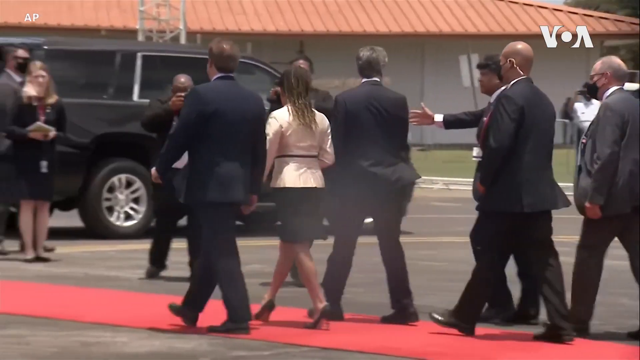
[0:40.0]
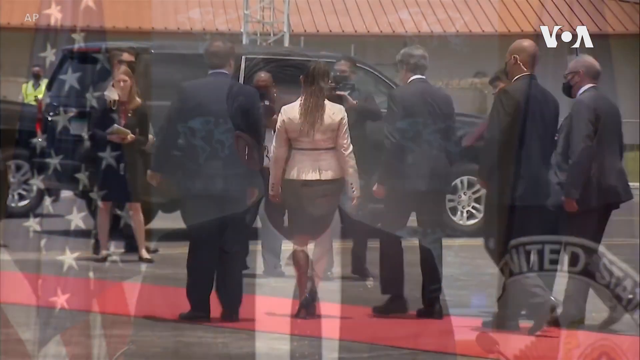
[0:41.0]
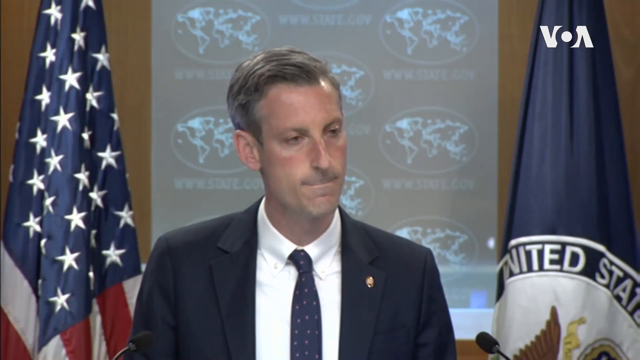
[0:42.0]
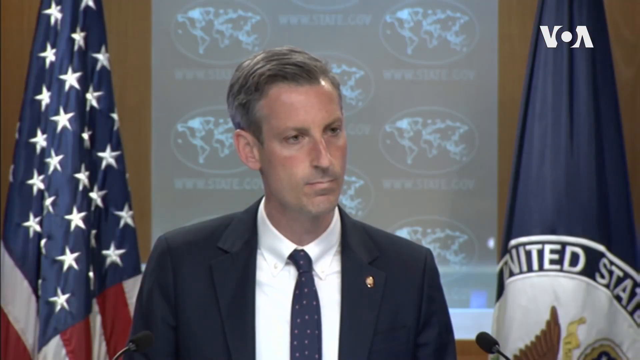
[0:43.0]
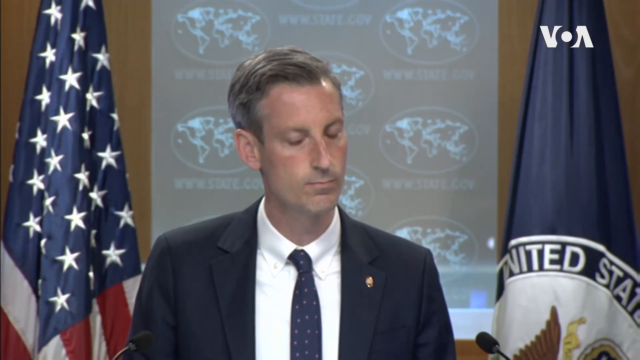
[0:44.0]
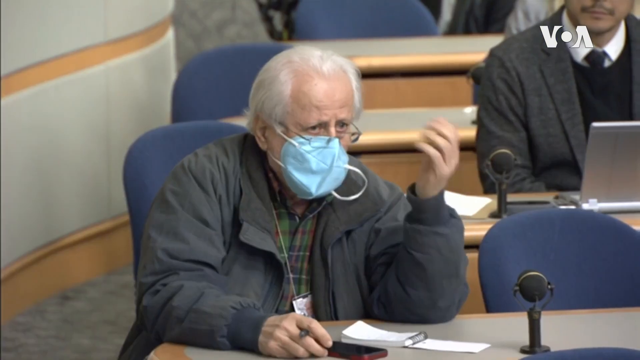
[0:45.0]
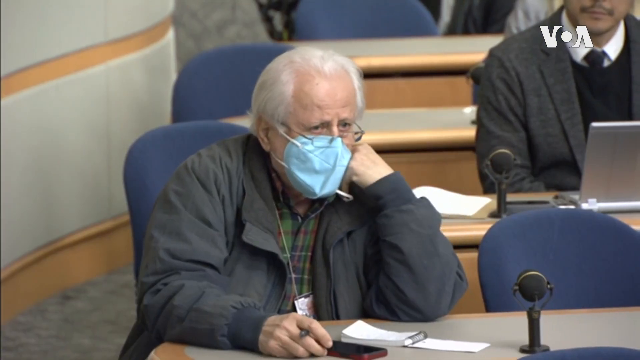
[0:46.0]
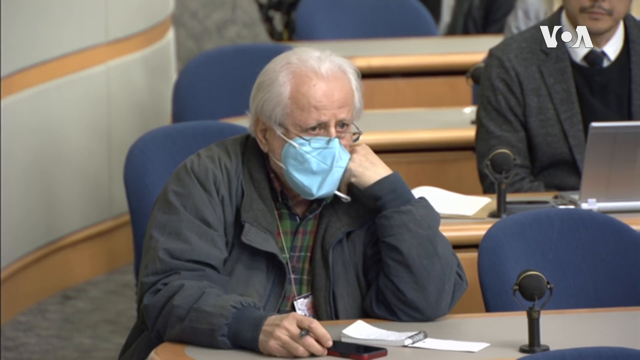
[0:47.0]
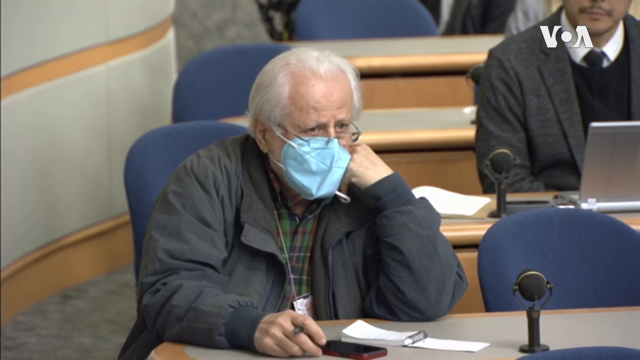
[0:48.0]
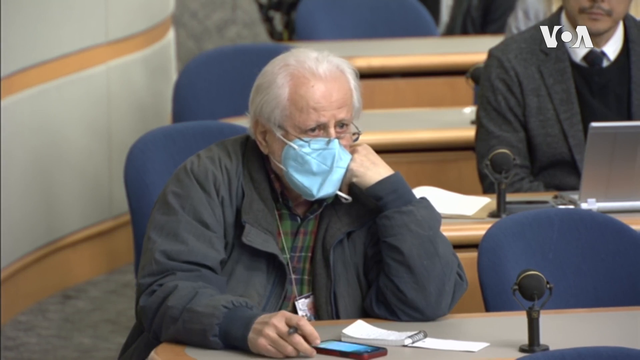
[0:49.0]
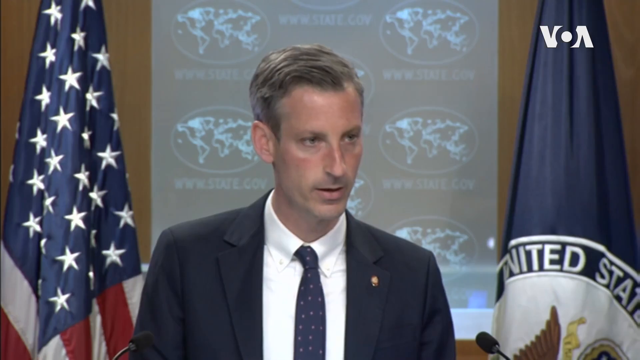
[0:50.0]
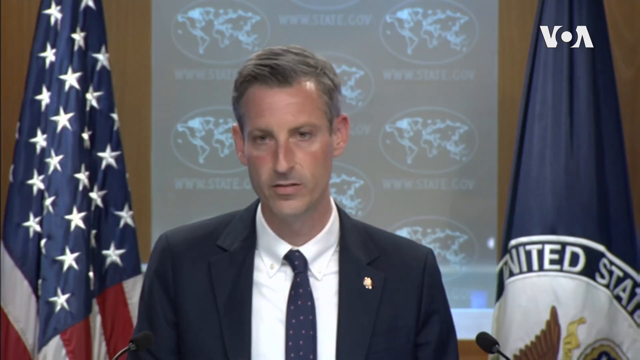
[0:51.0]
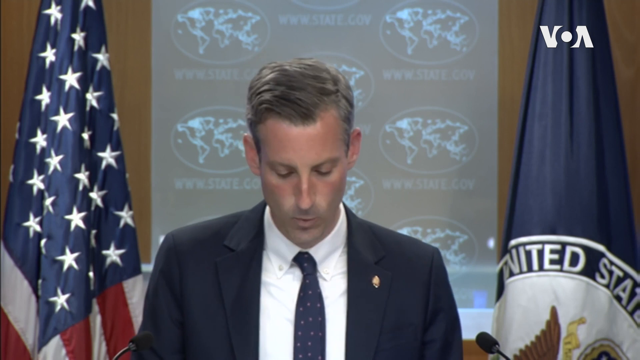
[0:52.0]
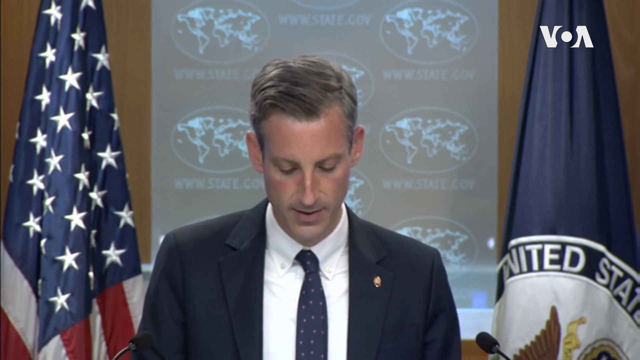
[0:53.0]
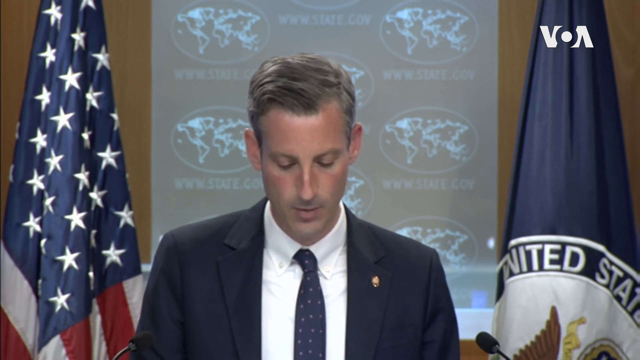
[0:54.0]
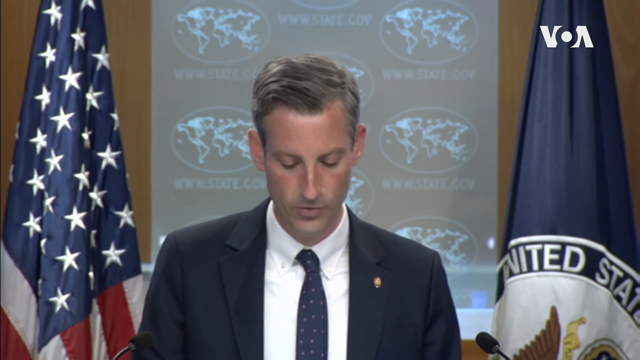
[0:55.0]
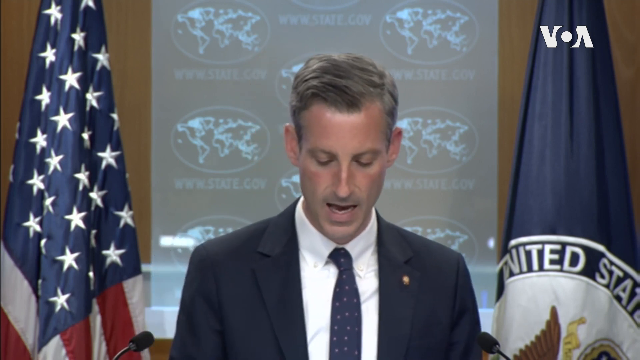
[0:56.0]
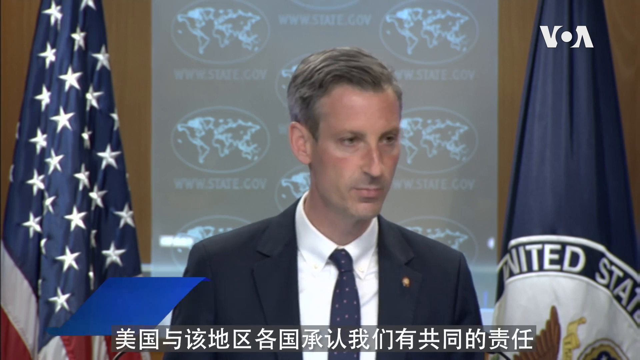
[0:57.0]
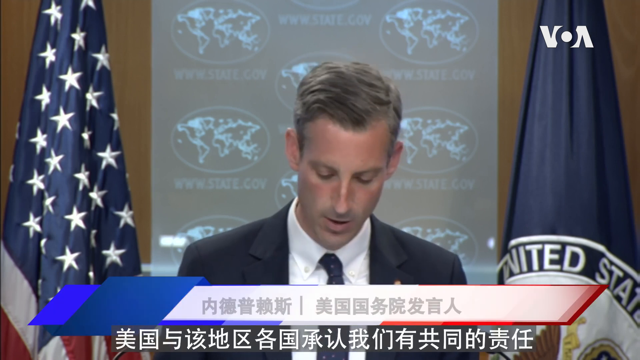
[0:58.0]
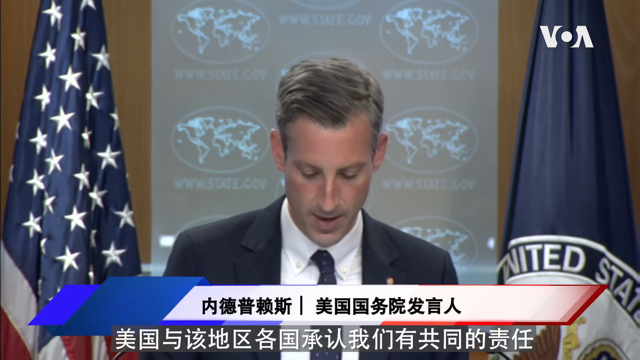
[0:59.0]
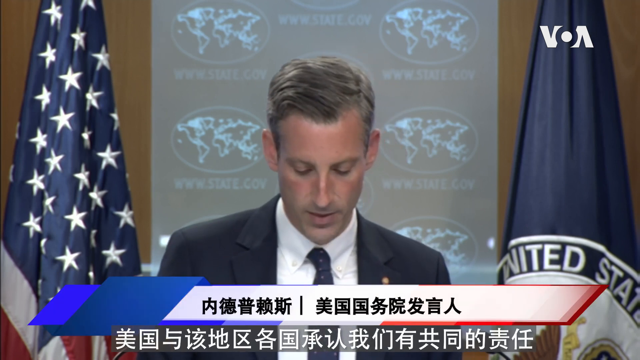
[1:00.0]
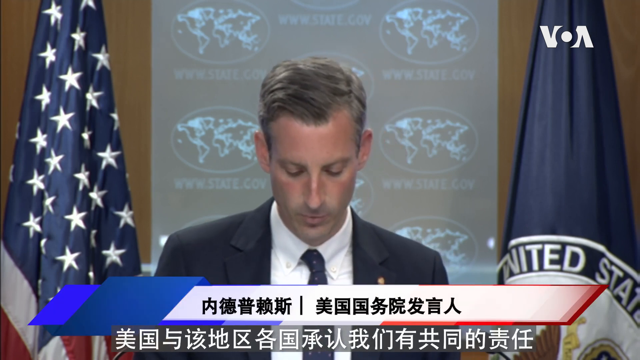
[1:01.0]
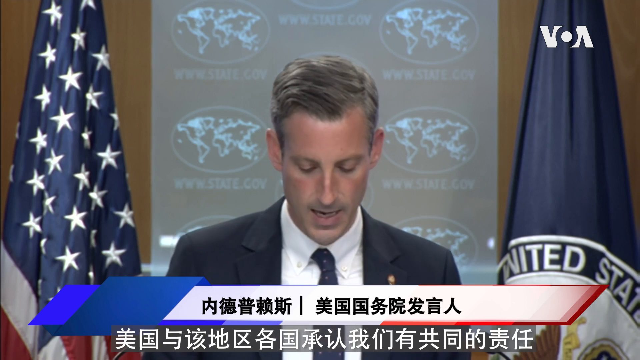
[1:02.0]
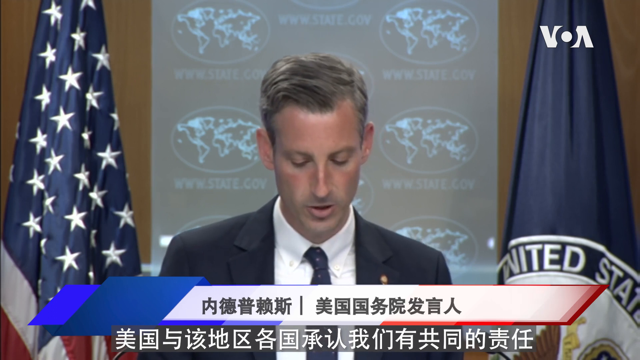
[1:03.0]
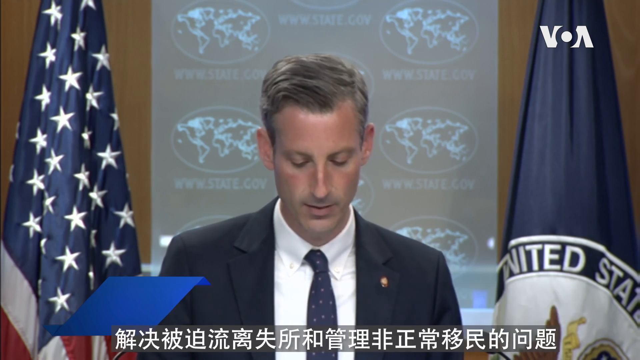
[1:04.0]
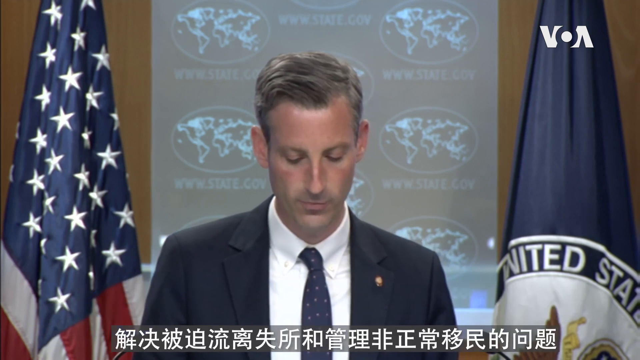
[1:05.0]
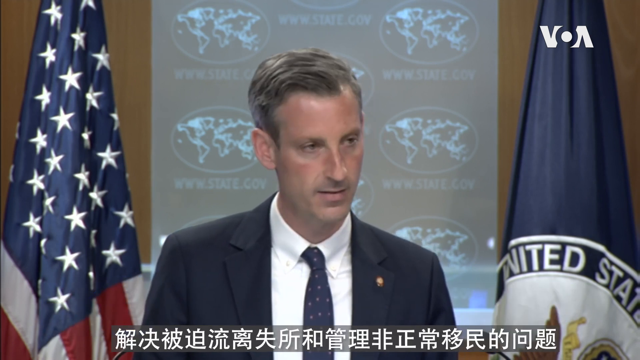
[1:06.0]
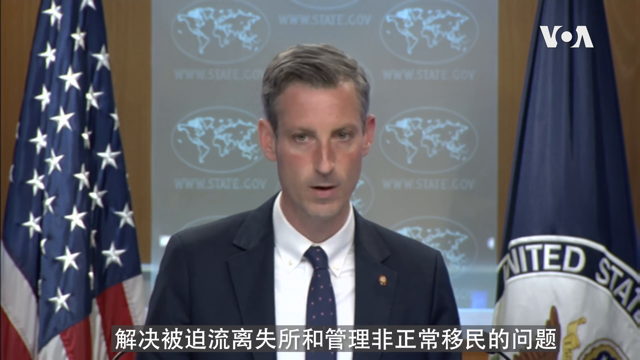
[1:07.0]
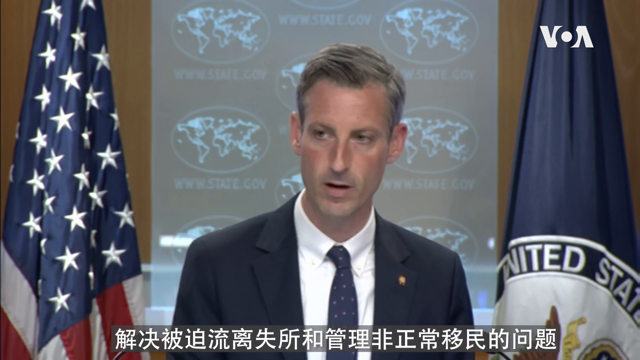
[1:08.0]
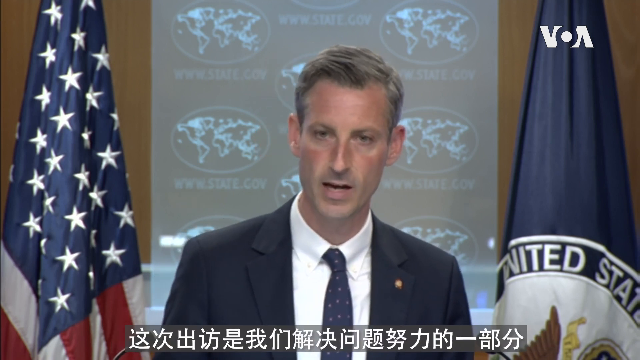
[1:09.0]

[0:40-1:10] The man who got off the plane, the lady and the gentleman walking with them continue down the red carpet, now seen from behind. Two Secret Service agents walk behind them, and the two men who were videotaping and taking pictures are in front of them. A lady stands in front of a black SUV, and another Secret Service agent there looks like he is about to open the door. The video then shows a man at a press conference with the United States flag behind him. He wears a blue and red polka-dotted tie, a suit coat and a white shirt, and his lips are kind of pressed together as he seems to answer questions. An older white man with a mask and glasses is then shown asking questions; his glasses are toward the bottom of his nose, he wears a coat, and he talks to the man apparently giving the press conference. The man at the press conference talks and looks down at a piece of paper, apparently with notes written on it, as he answers questions. He keeps looking down while talking, then looks up, apparently looks around the press conference, and continues talking.